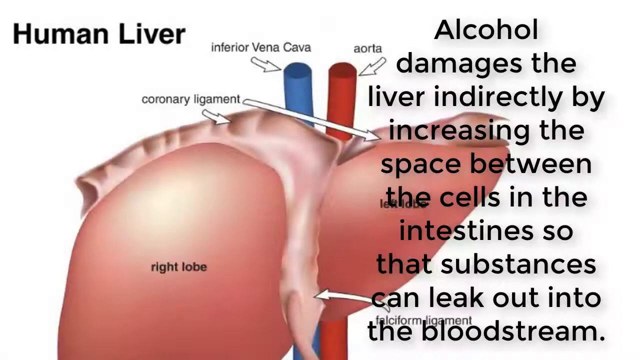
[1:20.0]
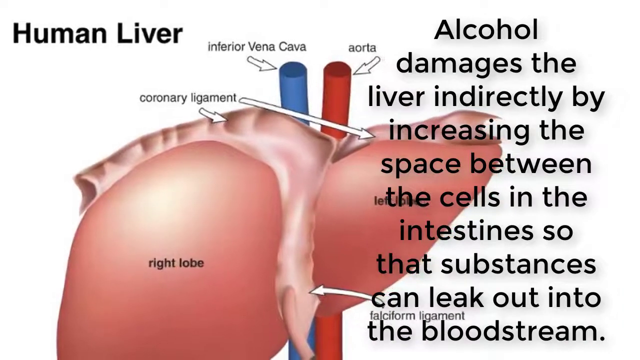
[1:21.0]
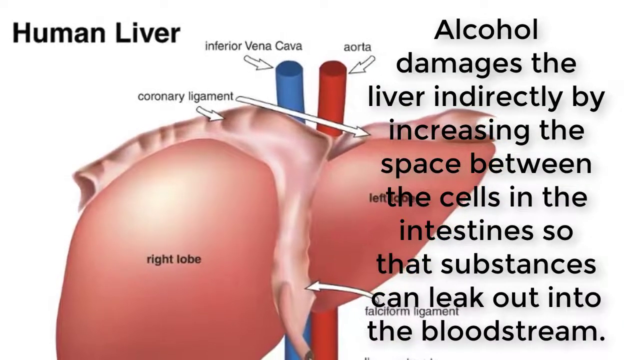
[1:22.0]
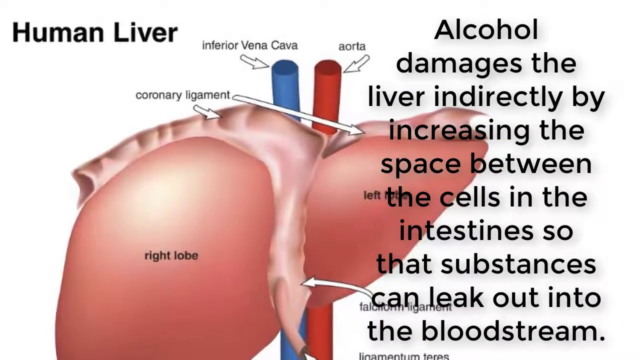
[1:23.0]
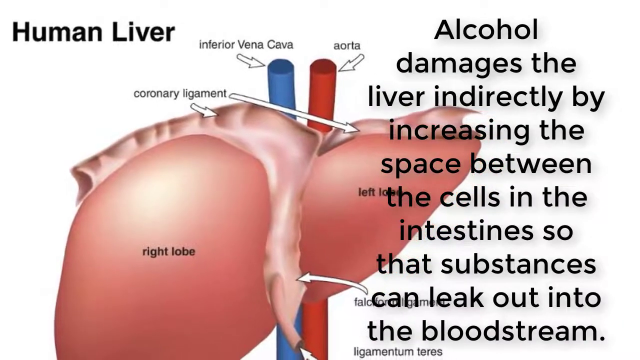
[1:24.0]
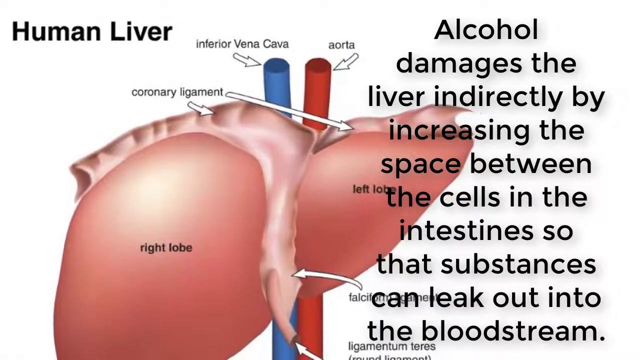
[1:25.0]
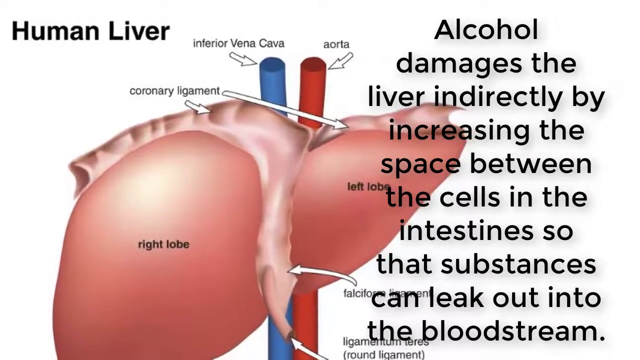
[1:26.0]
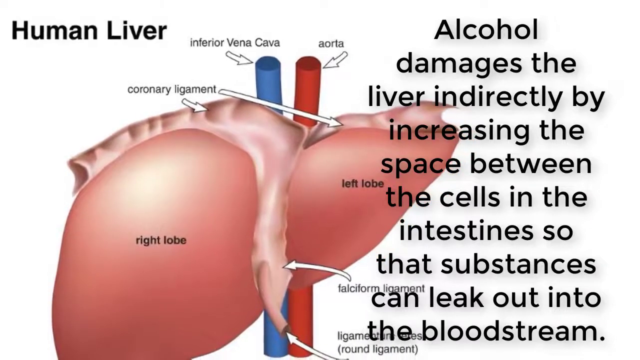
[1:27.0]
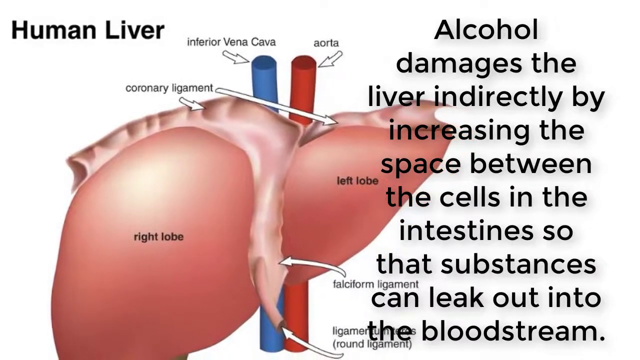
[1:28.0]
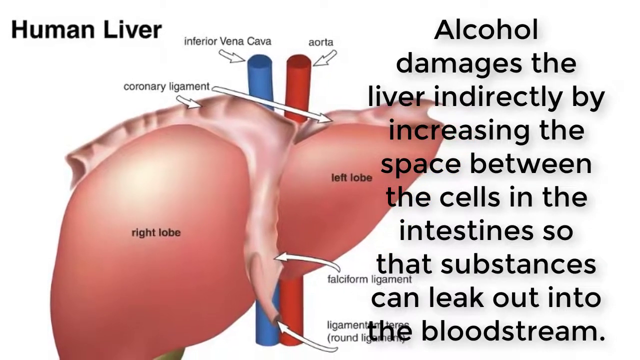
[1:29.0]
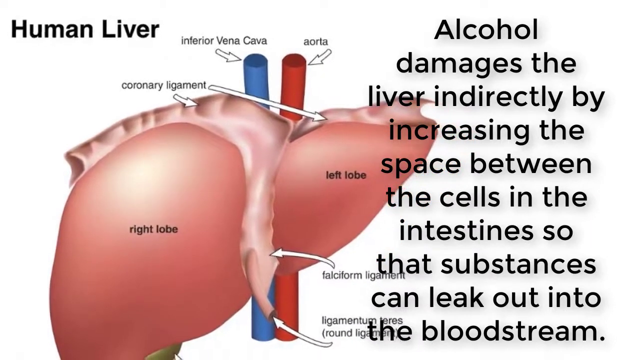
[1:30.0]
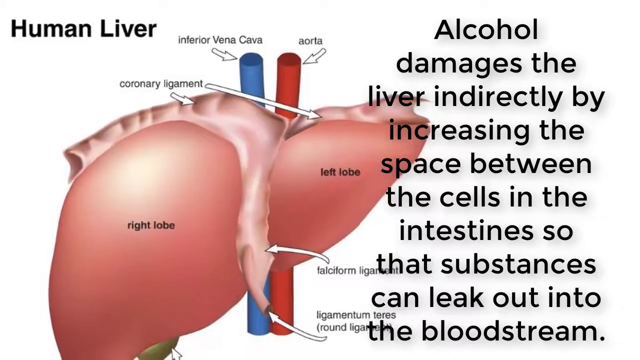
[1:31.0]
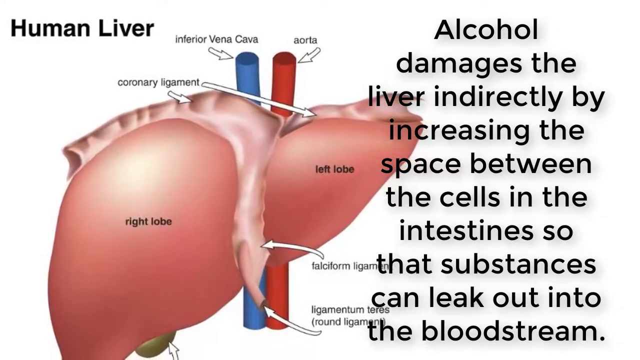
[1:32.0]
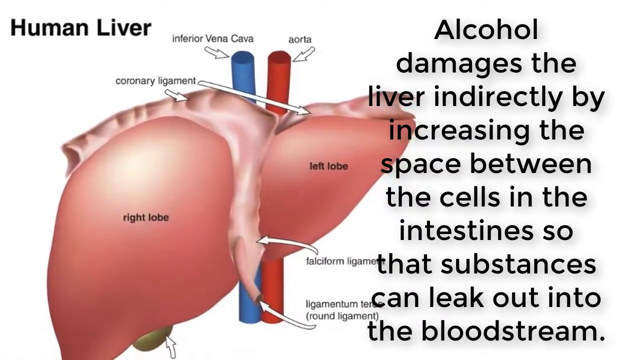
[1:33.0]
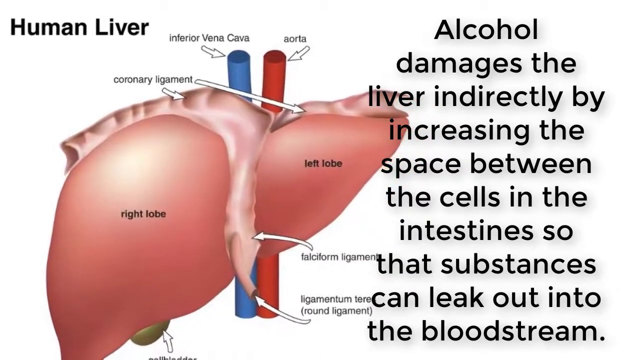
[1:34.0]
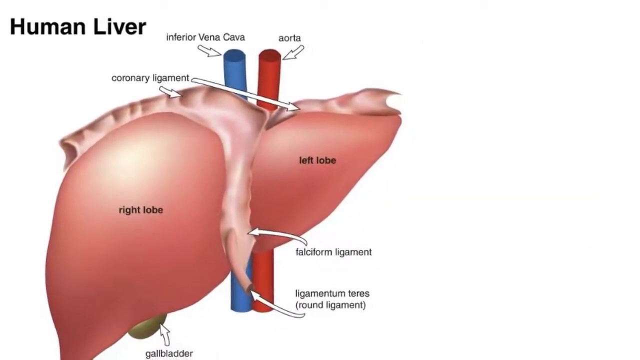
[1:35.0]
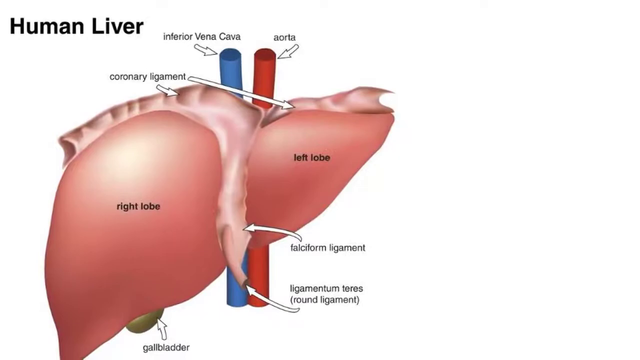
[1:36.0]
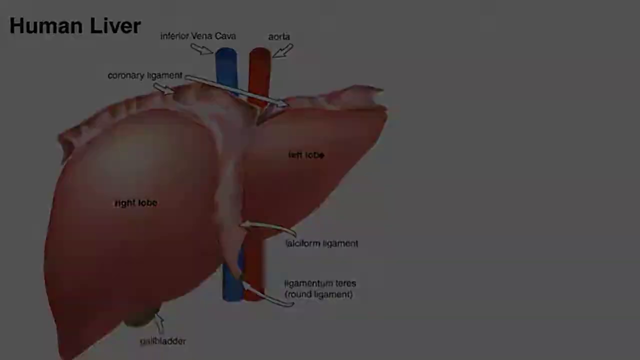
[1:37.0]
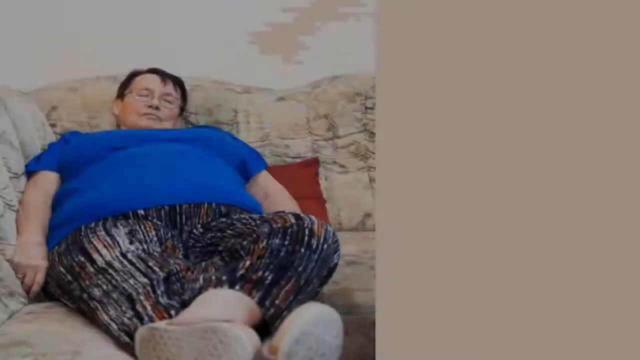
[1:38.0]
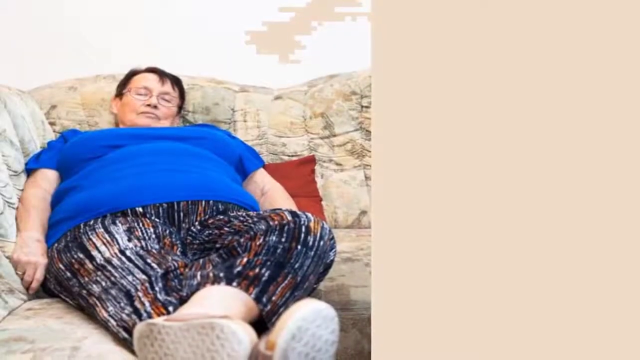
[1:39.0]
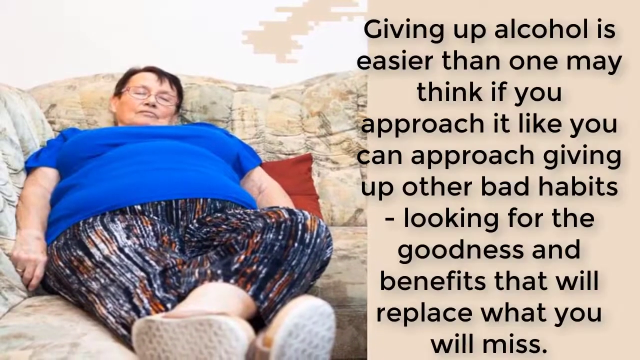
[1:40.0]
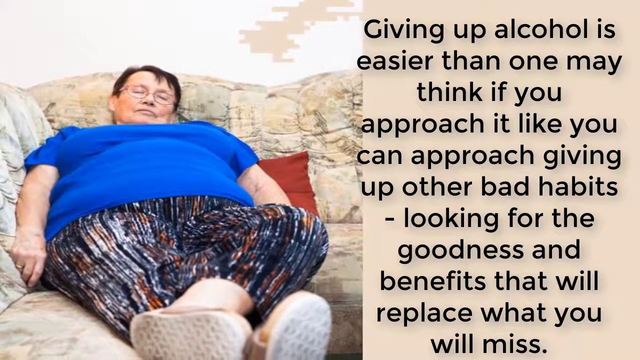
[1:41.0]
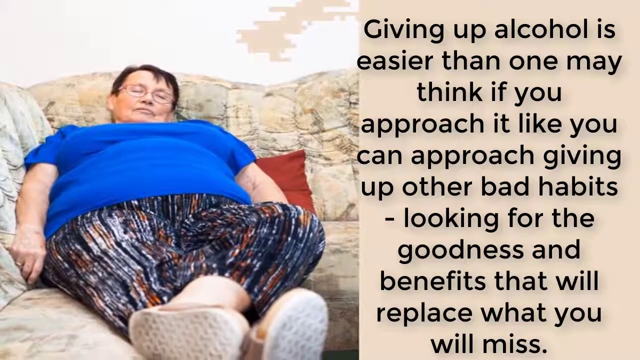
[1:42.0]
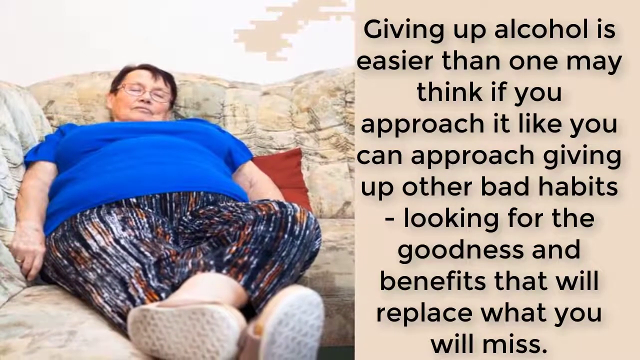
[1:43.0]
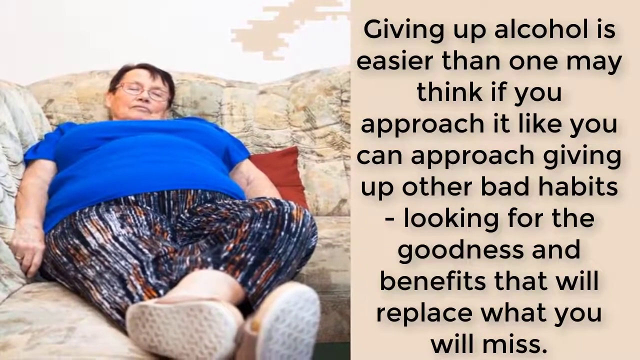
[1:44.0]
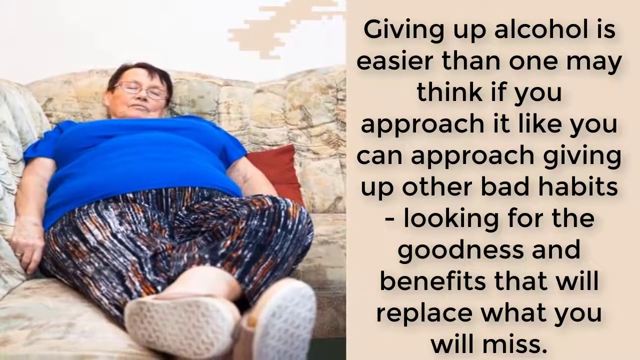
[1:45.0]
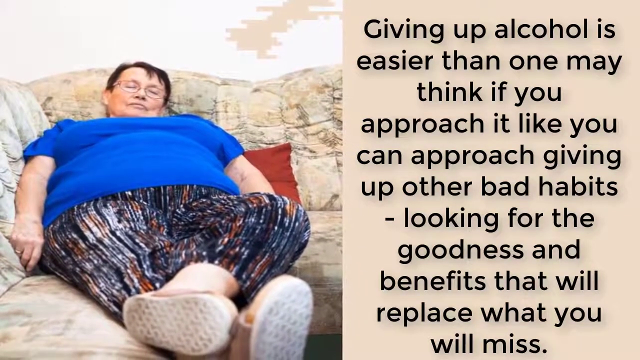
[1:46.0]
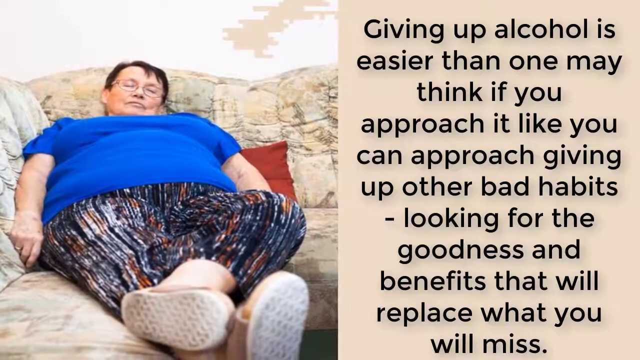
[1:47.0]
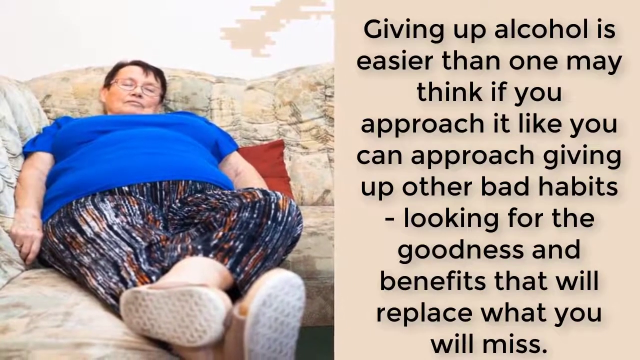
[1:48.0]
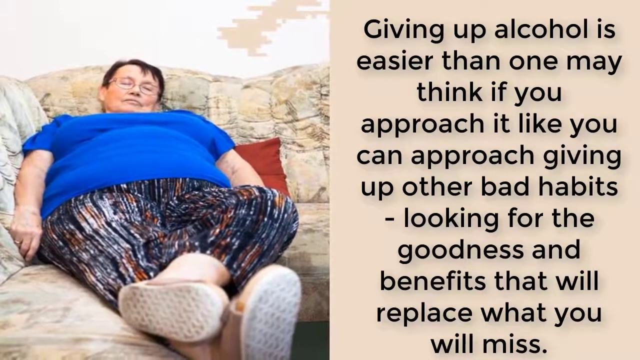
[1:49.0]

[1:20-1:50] A picture of the human liver appears, with "Human Liver" in black lettering at the top left of the screen. On the right side, text reads "Alcohol damages the liver indirectly by increasing the space between the cells in the intestines so that substances can leak out into the bloodstream." In the center is the picture of the liver with labeled parts: from the top, the coronary ligament, the inferior vena cava, the aorta, and underneath, the right lobe and the left lobe. The camera zooms out to show more of the picture. Toward the bottom of the liver, one arrow points to the falciform ligament and another to the ligamentum teres (round ligament). The next picture shows a very obese woman lying on a couch with her head back and her eyes closed. She wears glasses, a royal blue shirt and stretchy pants. Text on the right side of the screen reads "Giving up alcohol is easier than one may think if you approach it like you can approach giving up other bad habits - looking for the goodness and benefits that will replace what you will miss." The camera pans out, showing the woman sleeping on the couch.